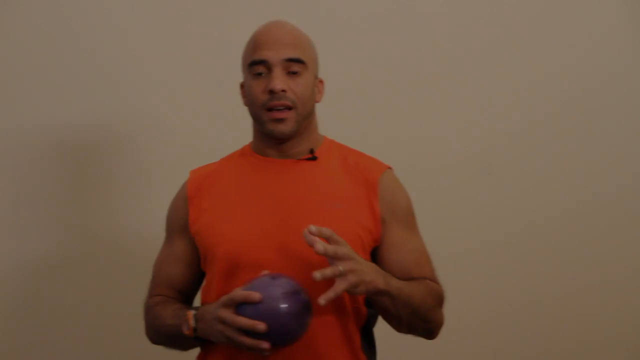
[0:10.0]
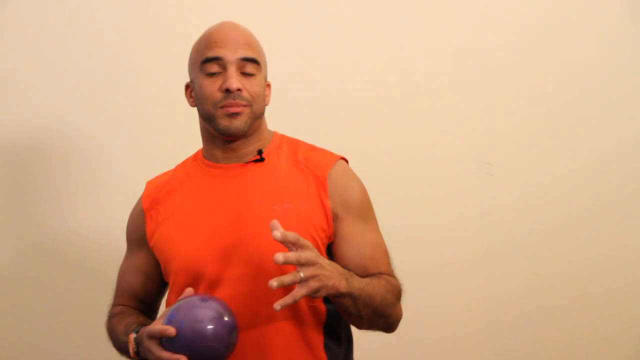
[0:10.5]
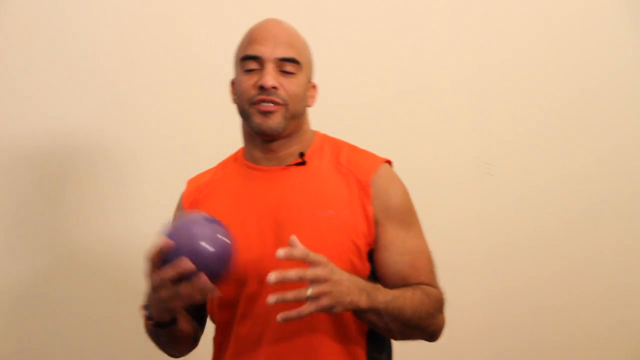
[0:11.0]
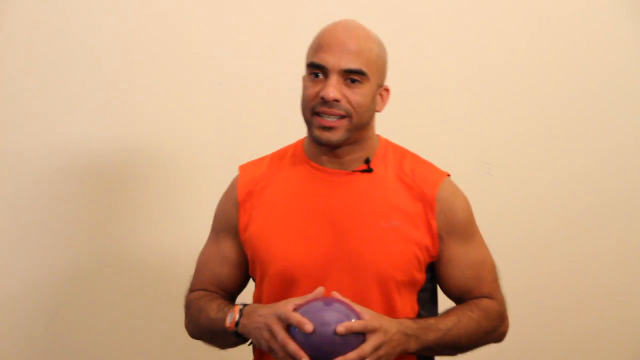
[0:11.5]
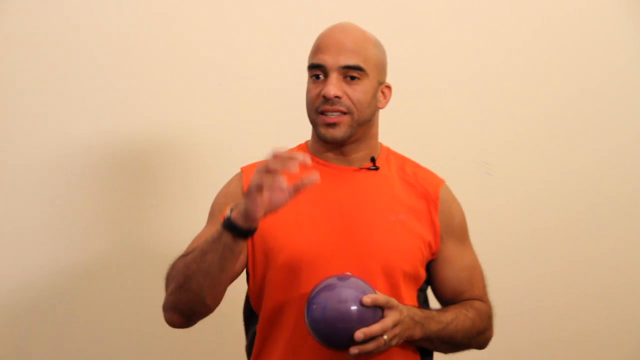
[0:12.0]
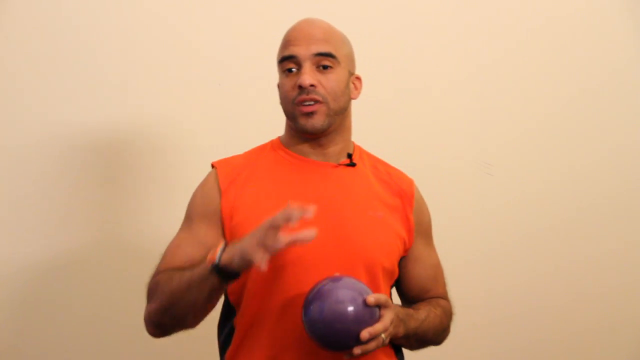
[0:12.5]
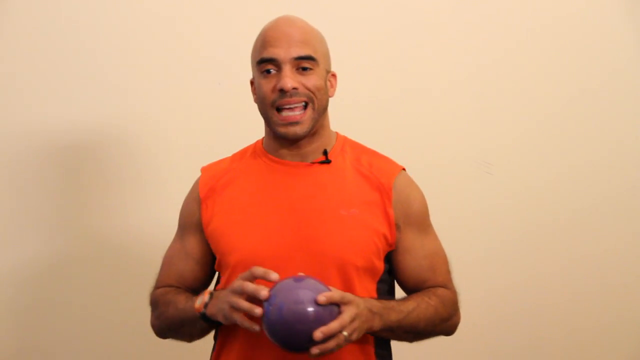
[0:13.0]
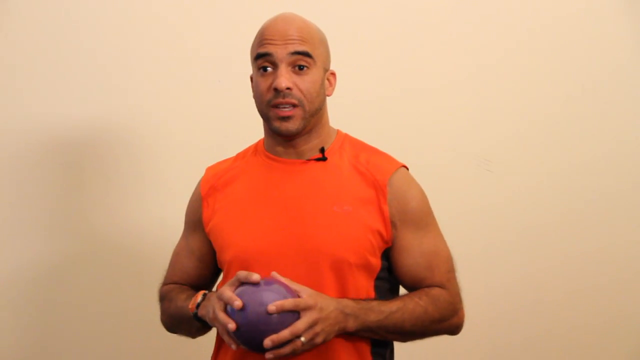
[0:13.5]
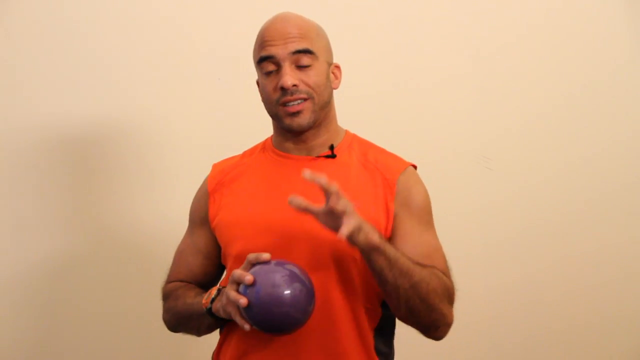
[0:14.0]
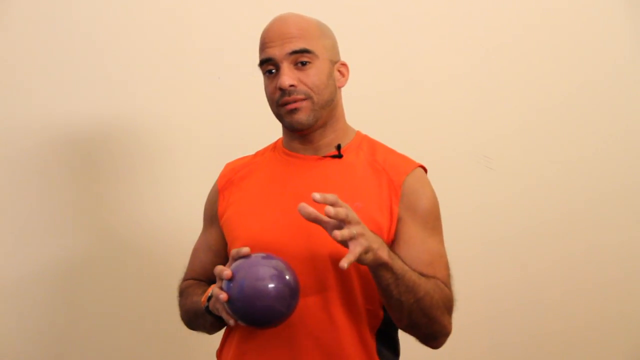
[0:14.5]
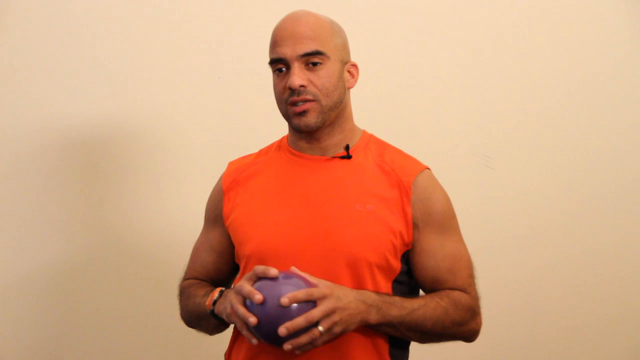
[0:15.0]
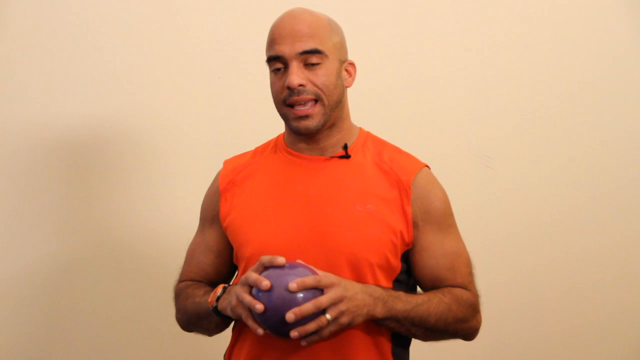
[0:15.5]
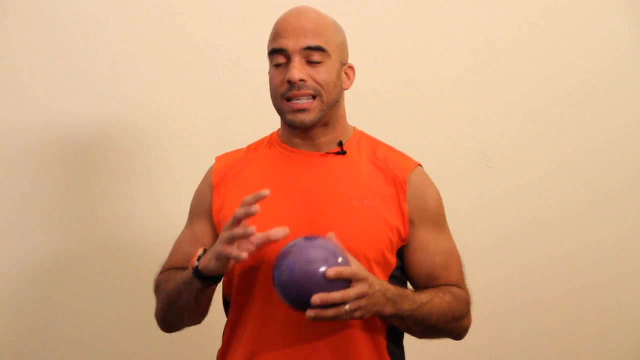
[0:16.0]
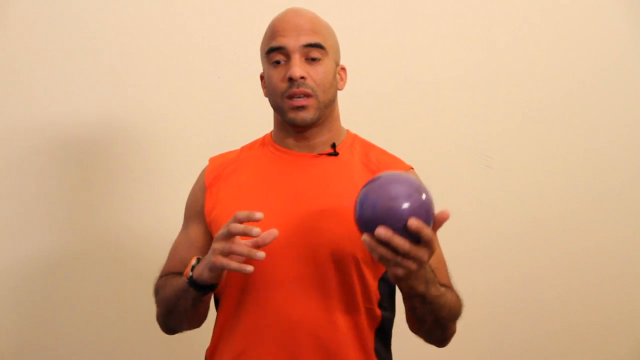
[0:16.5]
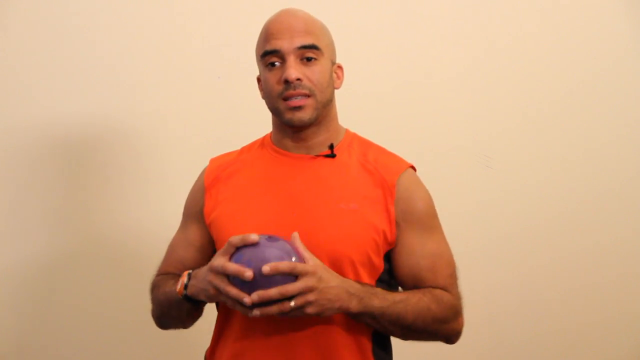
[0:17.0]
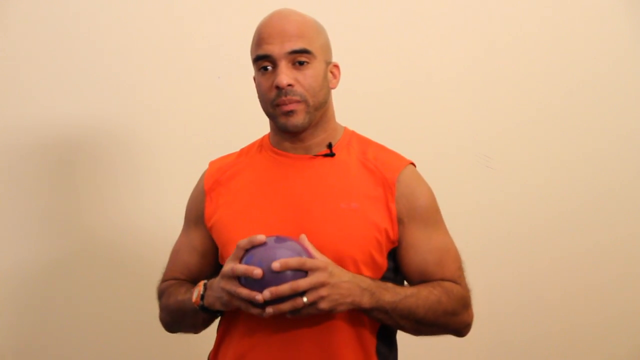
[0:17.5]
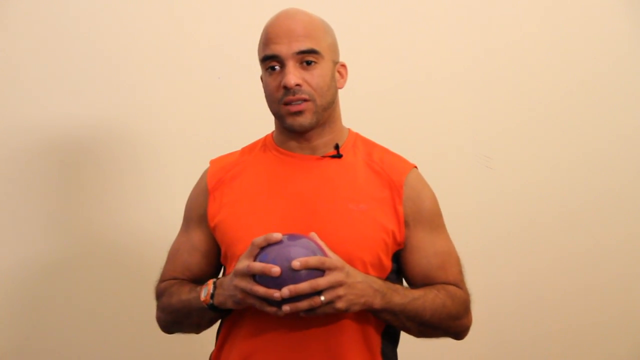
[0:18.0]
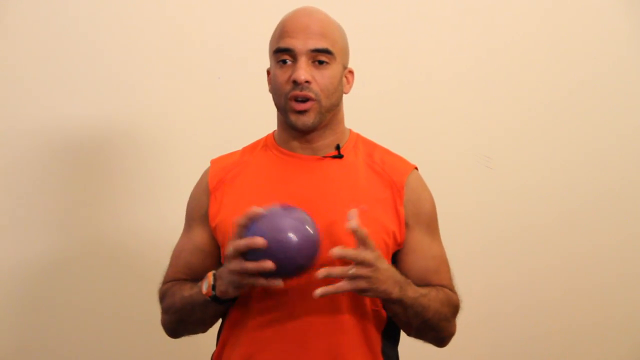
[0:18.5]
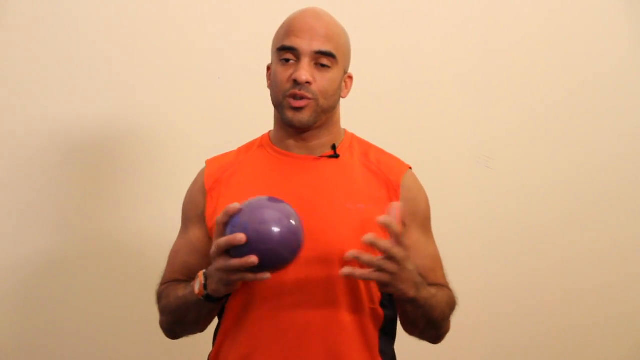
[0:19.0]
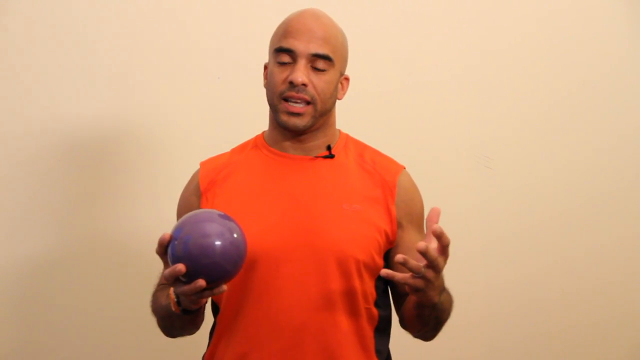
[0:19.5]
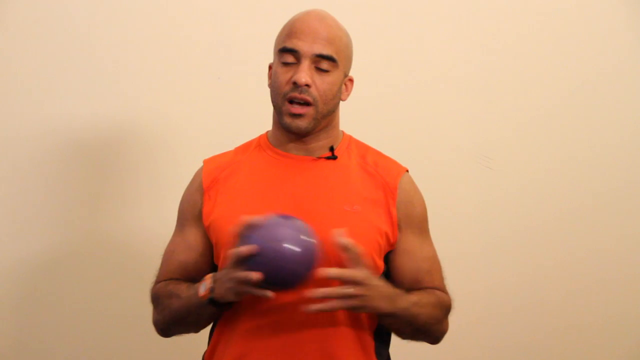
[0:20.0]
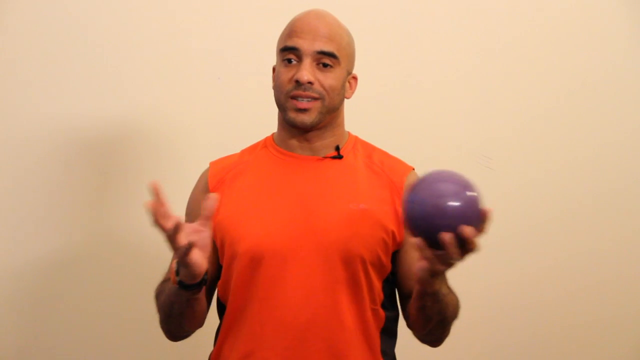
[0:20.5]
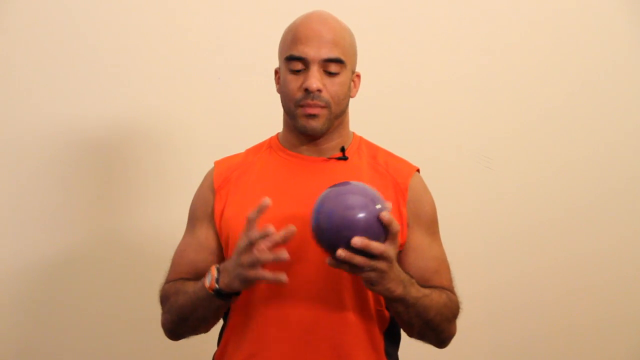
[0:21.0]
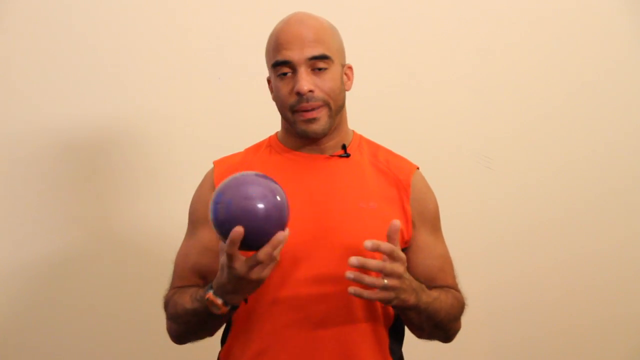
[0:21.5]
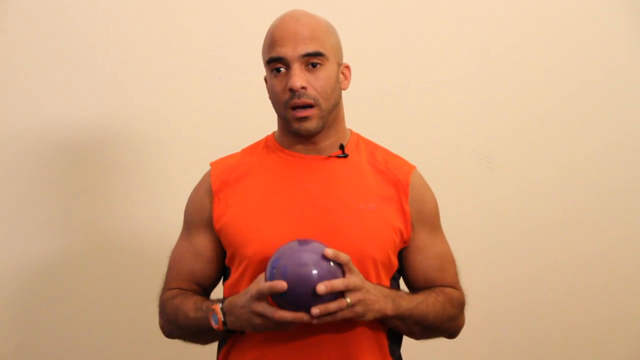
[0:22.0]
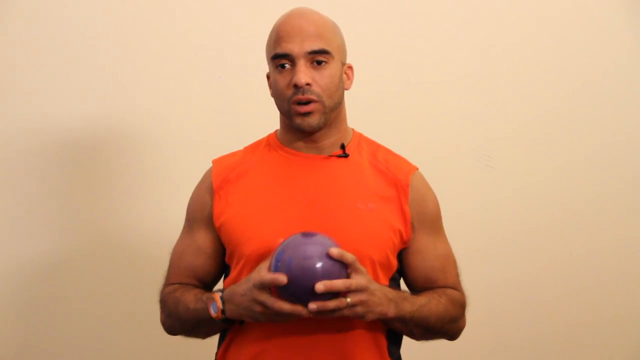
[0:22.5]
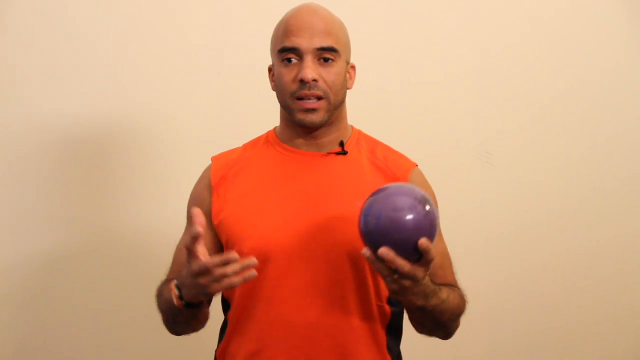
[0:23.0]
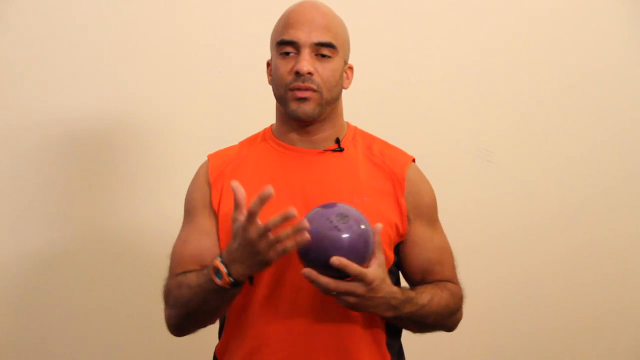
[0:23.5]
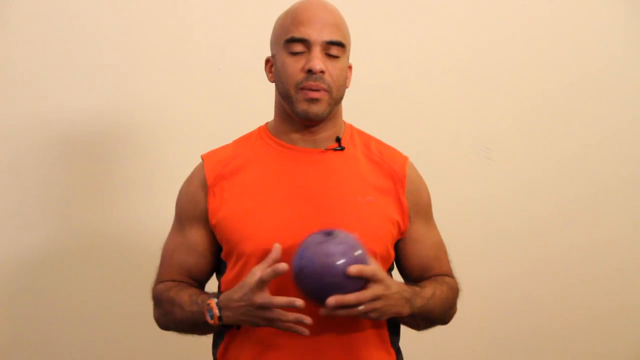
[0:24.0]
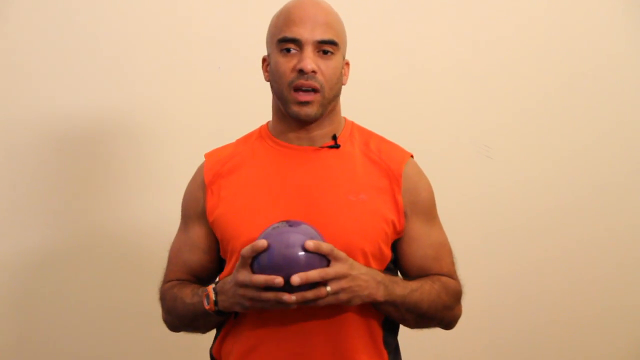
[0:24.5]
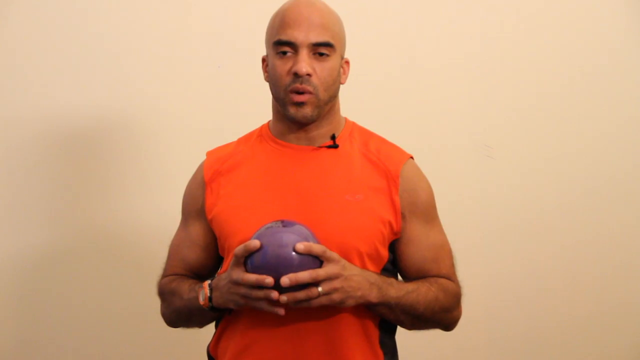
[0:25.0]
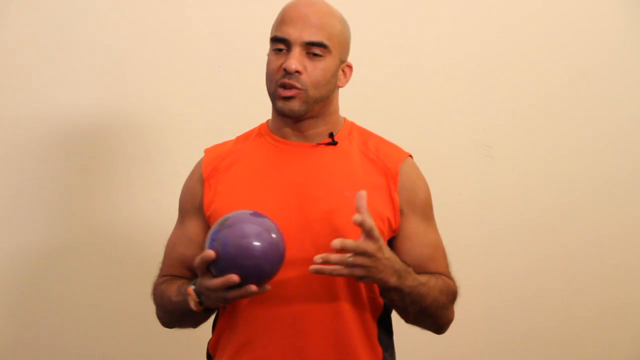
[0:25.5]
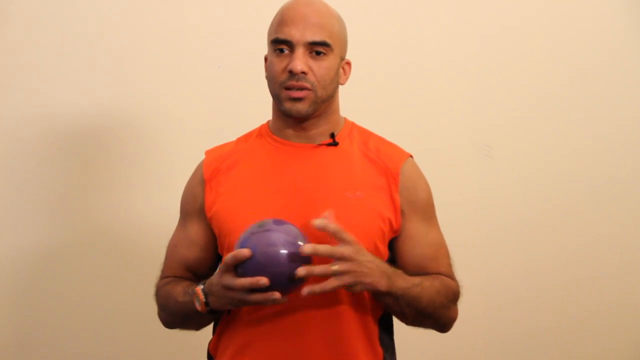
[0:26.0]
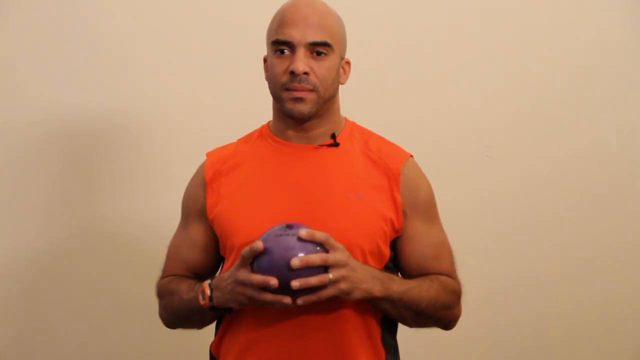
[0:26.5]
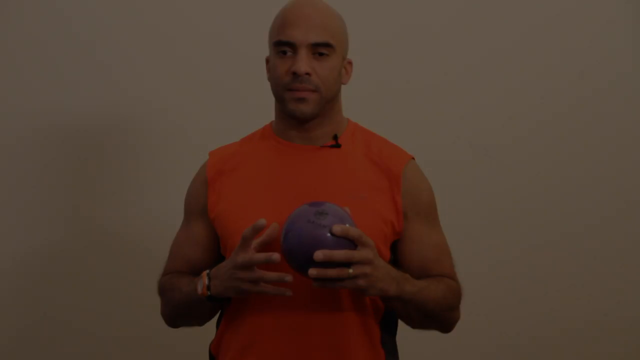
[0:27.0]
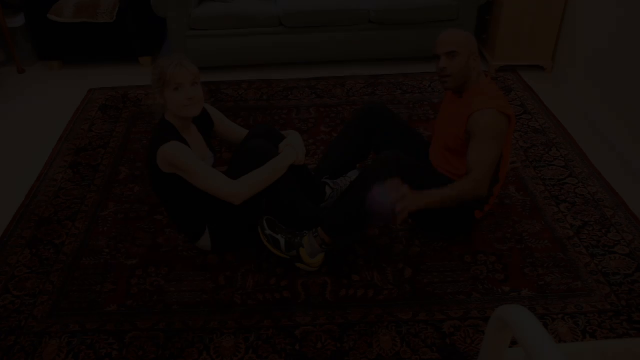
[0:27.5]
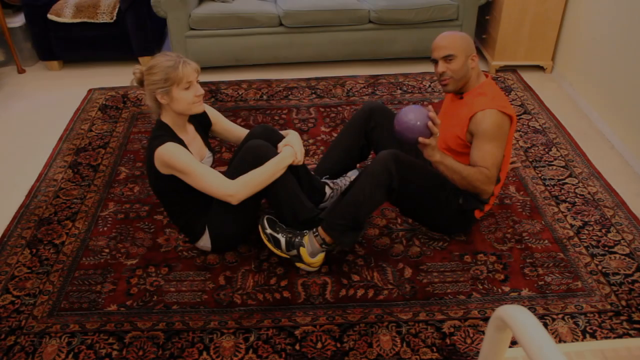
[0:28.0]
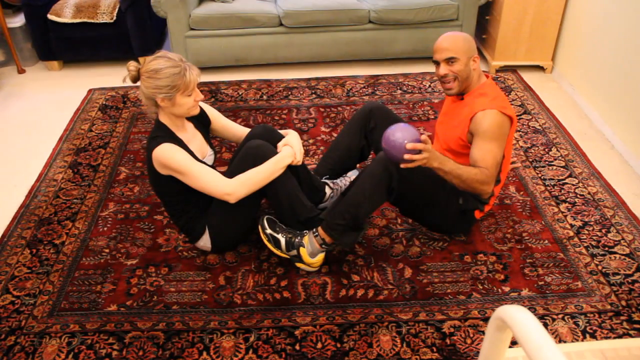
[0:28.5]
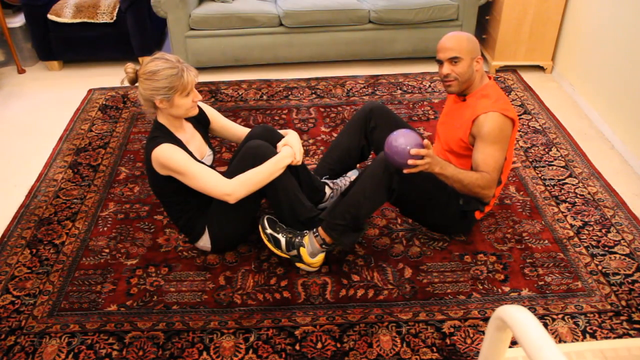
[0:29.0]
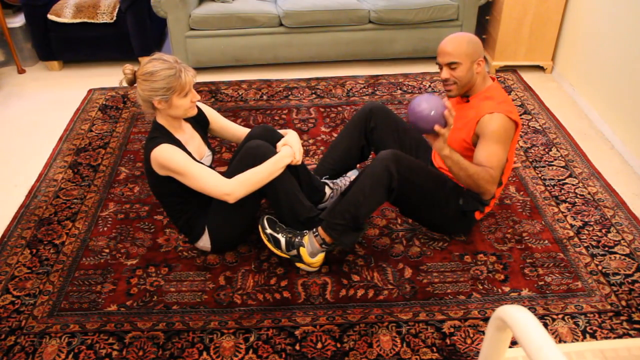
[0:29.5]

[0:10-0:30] The disclaimer continues, stating that "the exercise instruction and advice presented in this video are in no way intended as a substitute for medical consultations" and that if at any point during the workout one begins to feel faint, dizzy or has physical discomfort, one "should stop immediately and consult a physician." It adds that the producers and Physical Fix disclaim any and all liability in connection with this program. The words "one minute for your heart" appear, and a person then demonstrates some exercise.